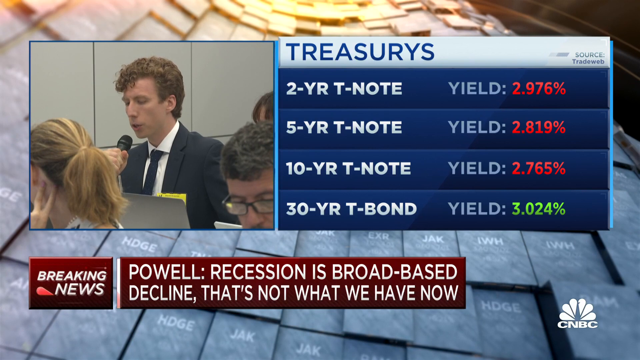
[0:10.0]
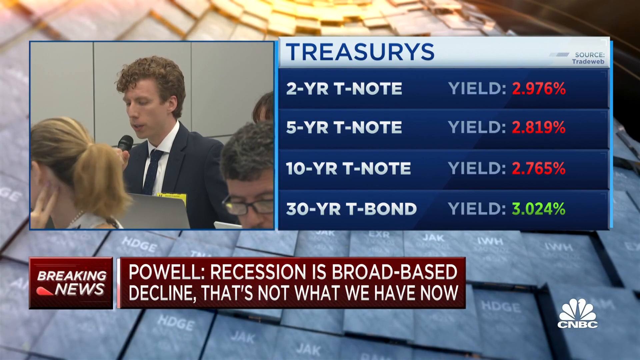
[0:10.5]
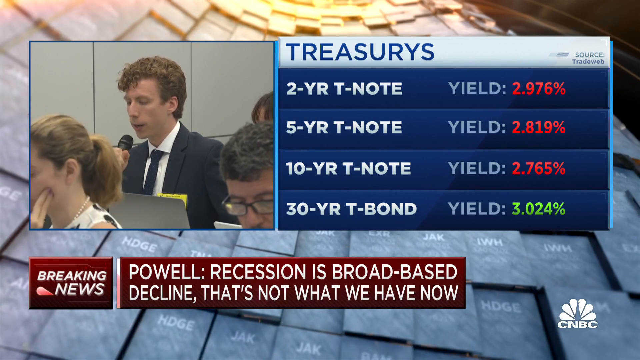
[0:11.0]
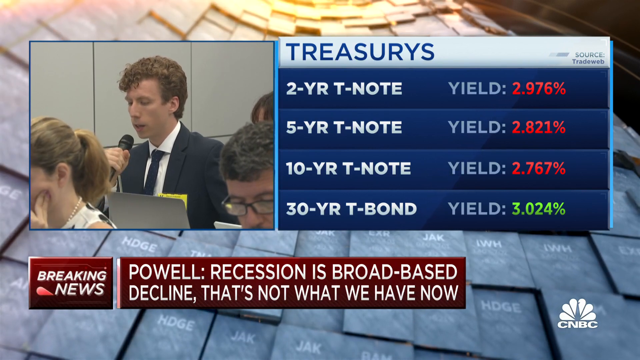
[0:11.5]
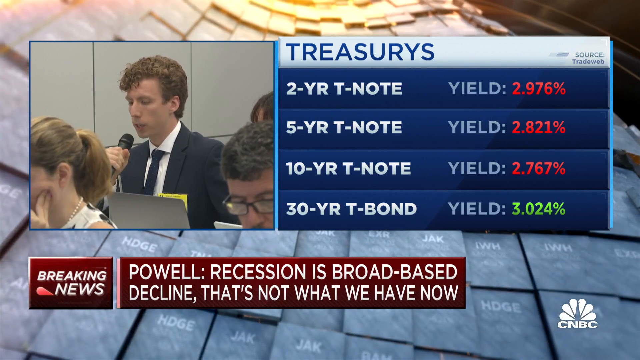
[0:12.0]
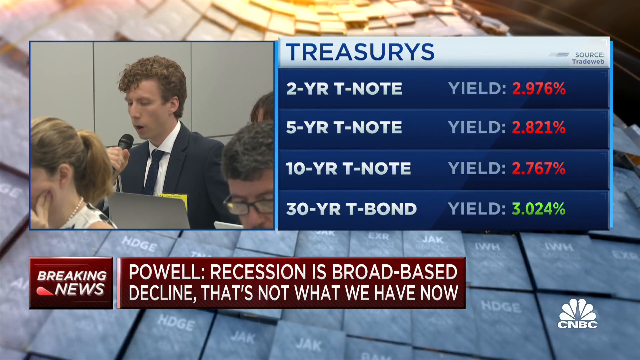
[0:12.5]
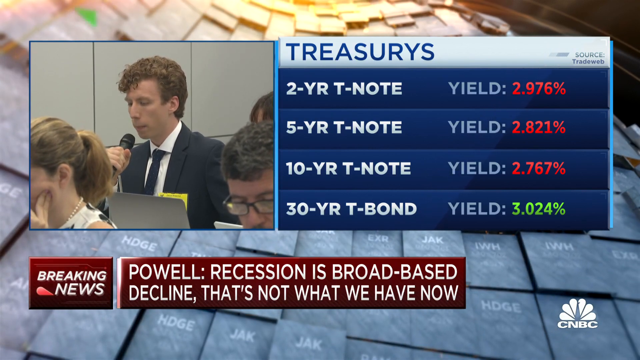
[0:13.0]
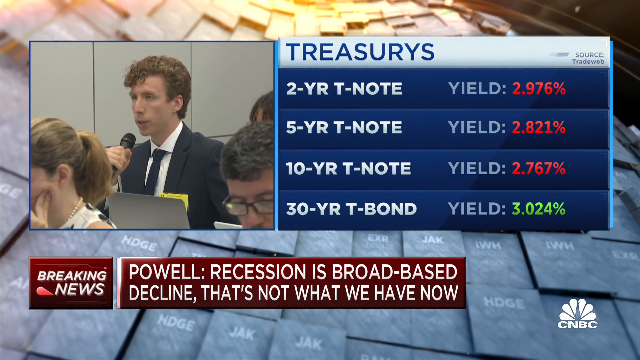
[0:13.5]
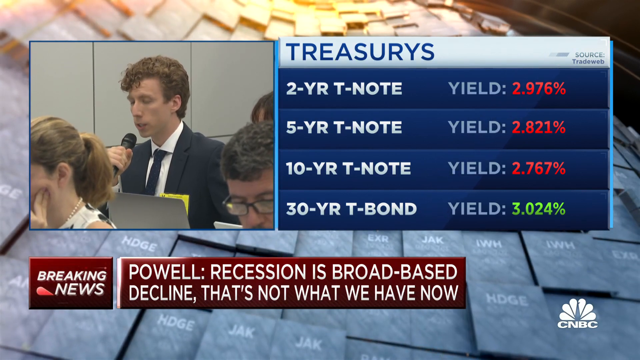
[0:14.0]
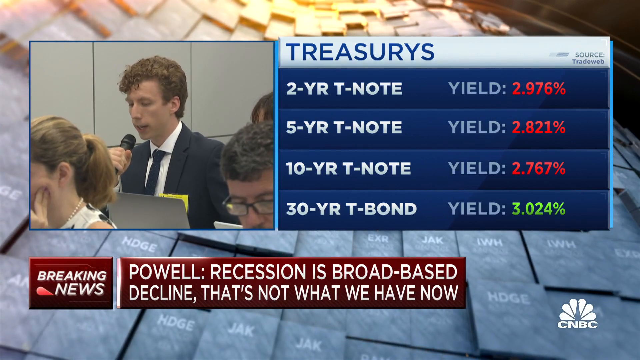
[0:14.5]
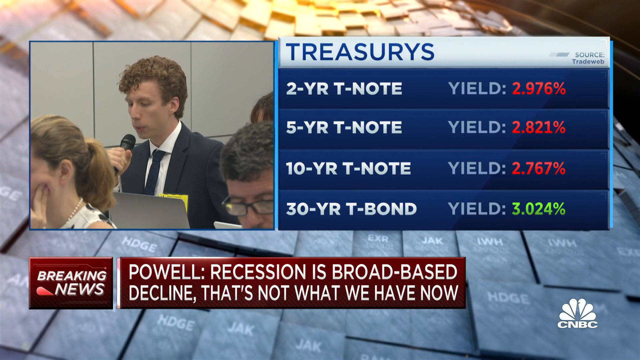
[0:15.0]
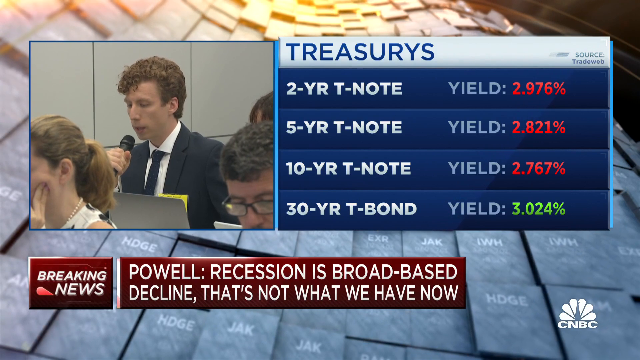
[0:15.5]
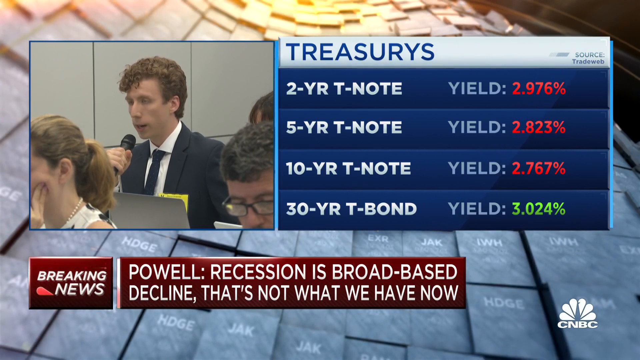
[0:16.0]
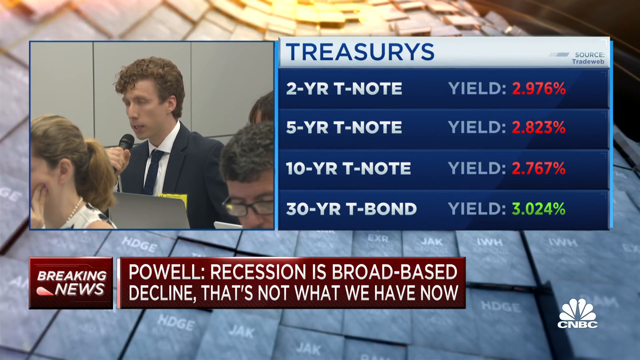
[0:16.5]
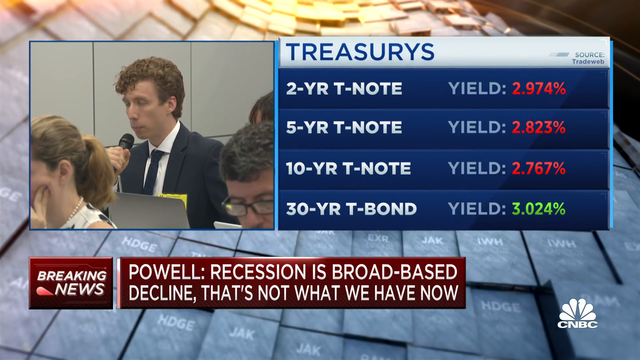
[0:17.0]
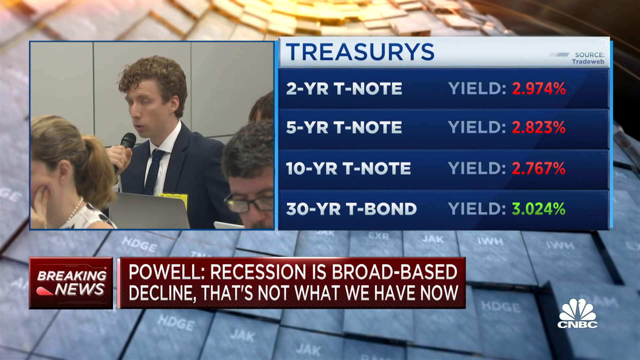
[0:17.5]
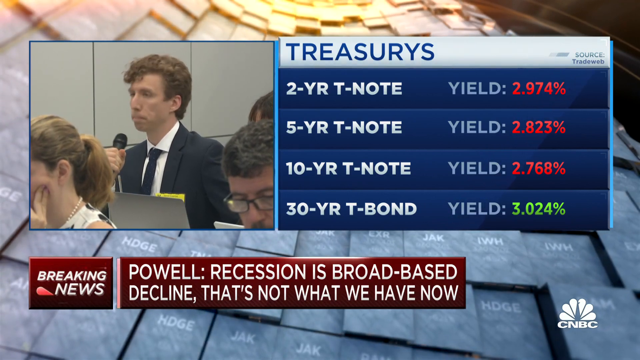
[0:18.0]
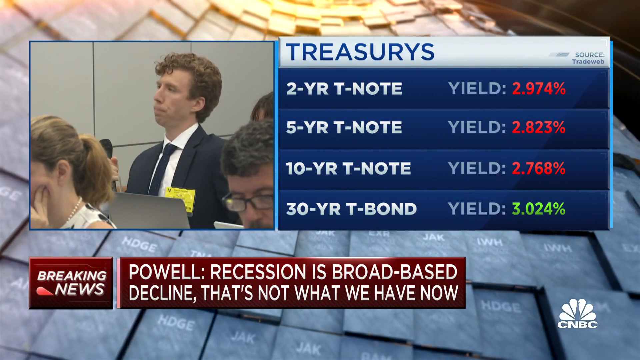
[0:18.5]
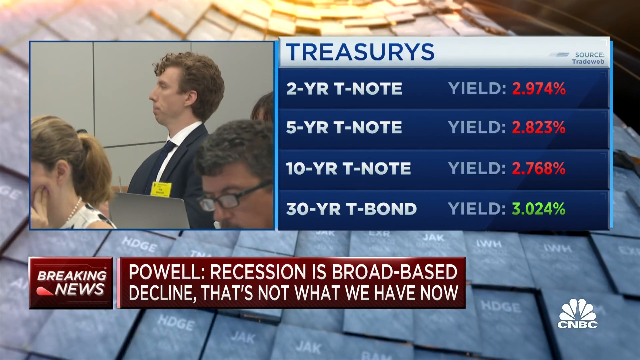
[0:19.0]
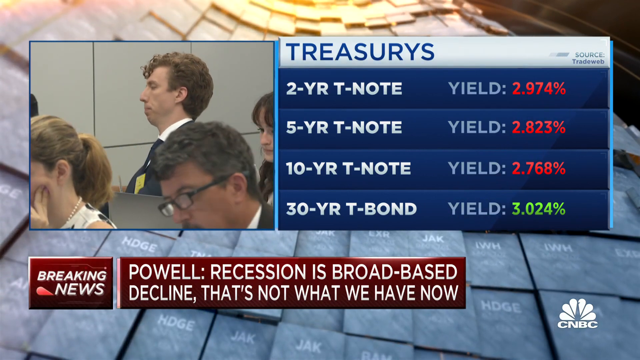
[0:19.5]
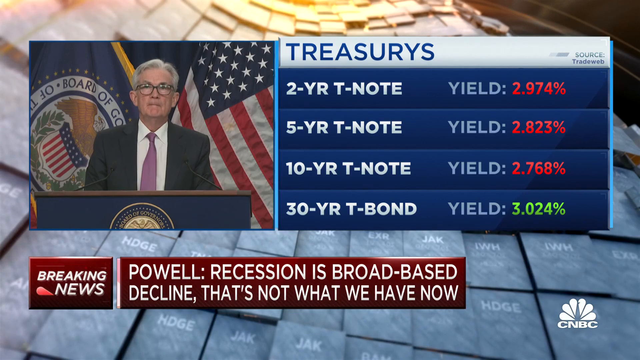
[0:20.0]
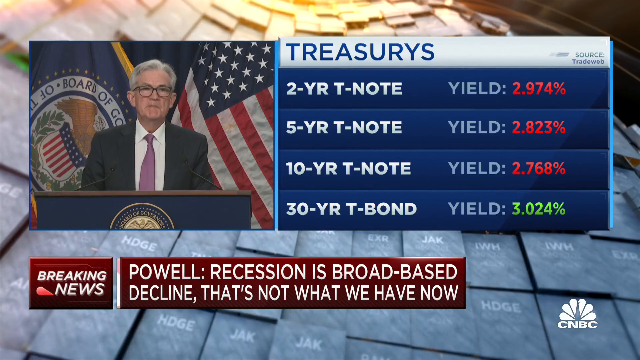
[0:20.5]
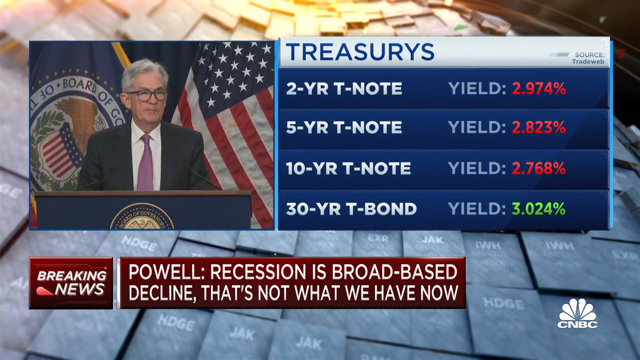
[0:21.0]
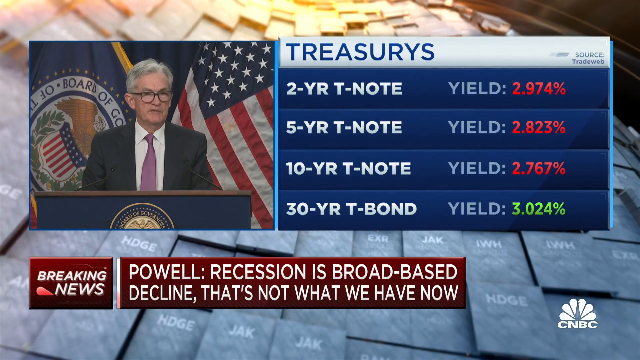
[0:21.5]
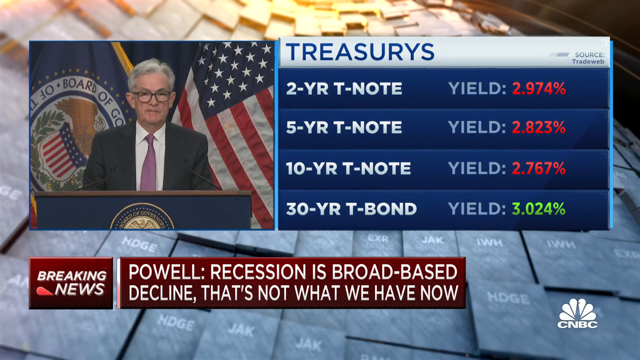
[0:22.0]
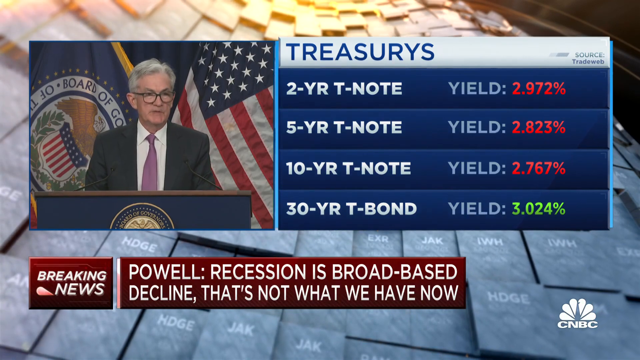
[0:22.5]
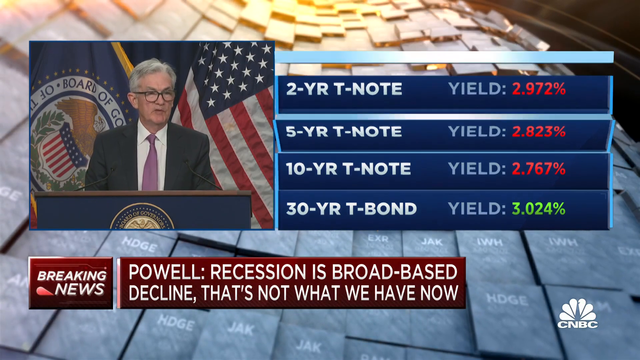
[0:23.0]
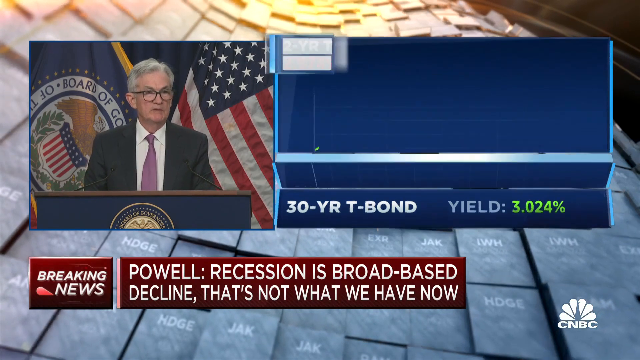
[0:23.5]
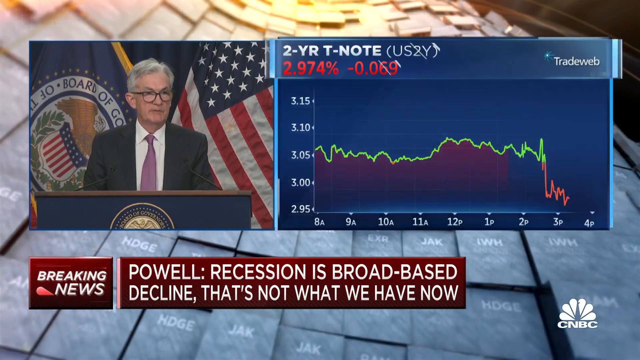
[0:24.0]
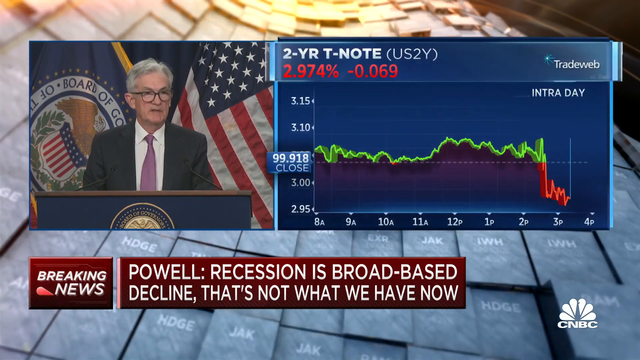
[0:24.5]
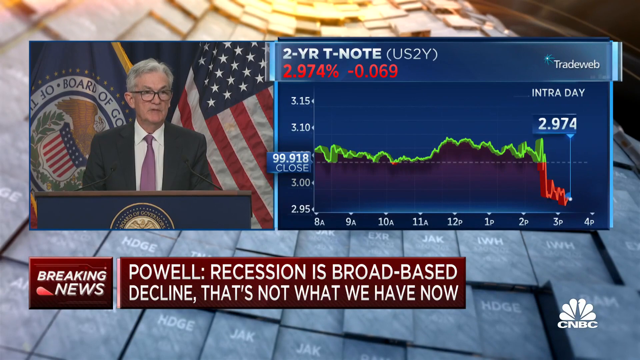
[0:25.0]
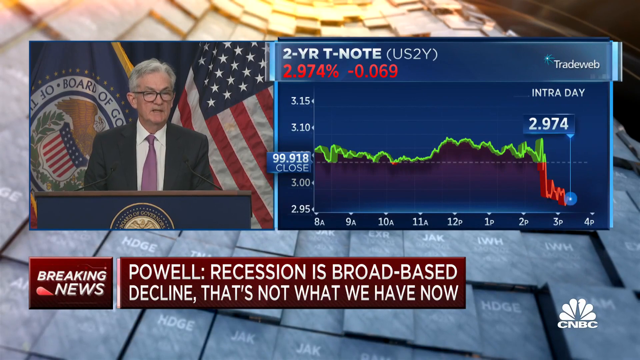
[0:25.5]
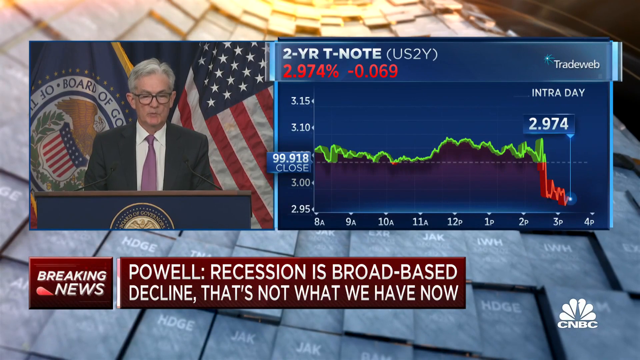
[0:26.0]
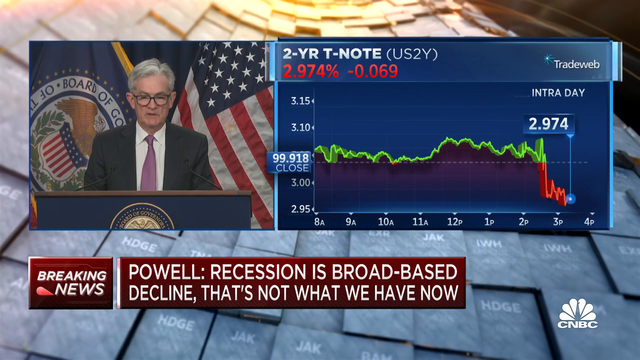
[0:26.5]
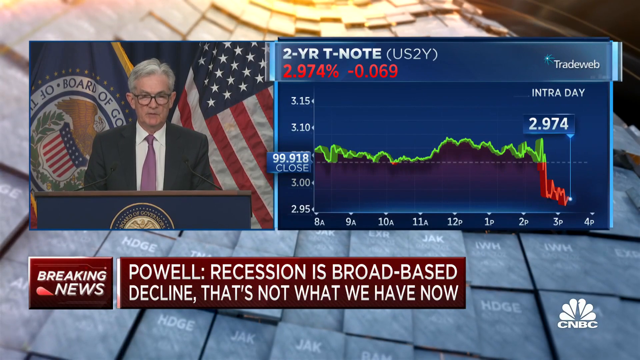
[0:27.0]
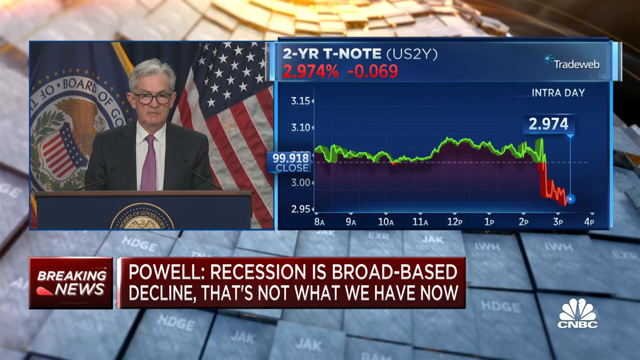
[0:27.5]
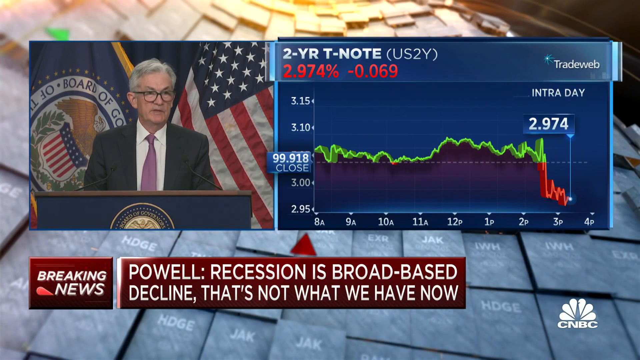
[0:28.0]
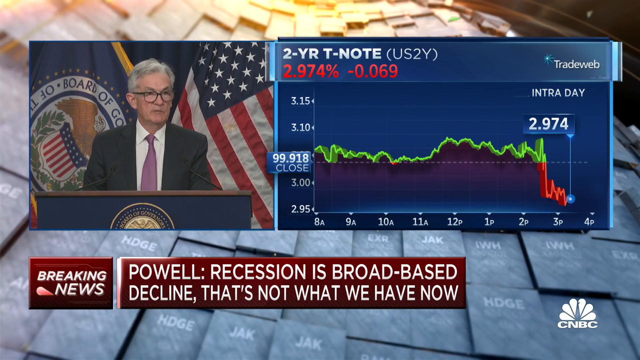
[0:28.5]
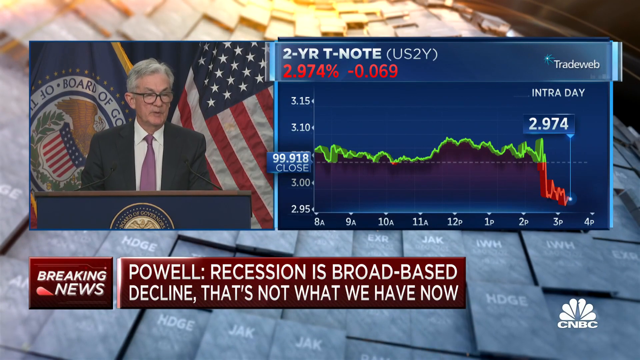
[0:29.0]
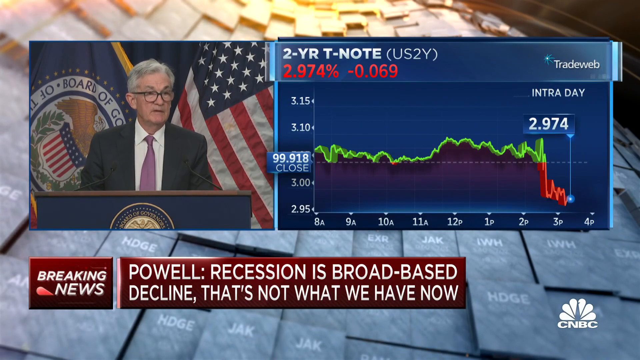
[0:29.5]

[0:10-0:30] The two-year note, five-year note, 10-year note and 30-year bond are shown again in a CNBC breaking news segment. People testify in front of Powell. A graph shows how the two-year Treasury has performed over time; the line is very inconsistent, and there is a sharp drop. The graph is an intraday graph from TradeWeb.